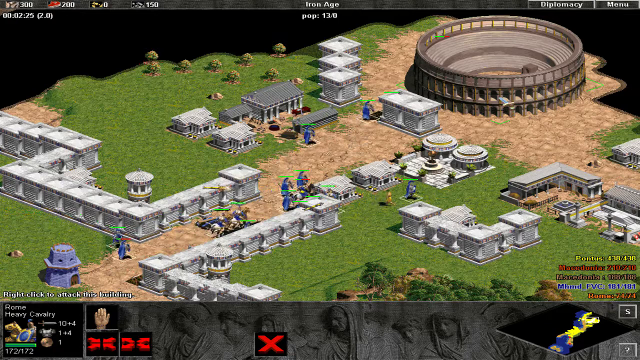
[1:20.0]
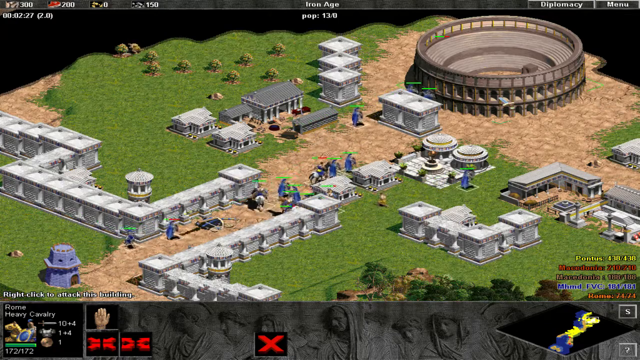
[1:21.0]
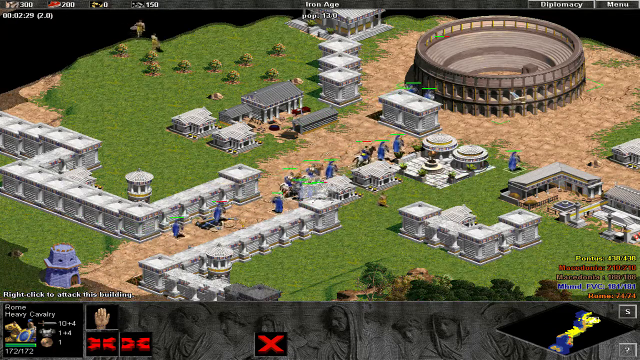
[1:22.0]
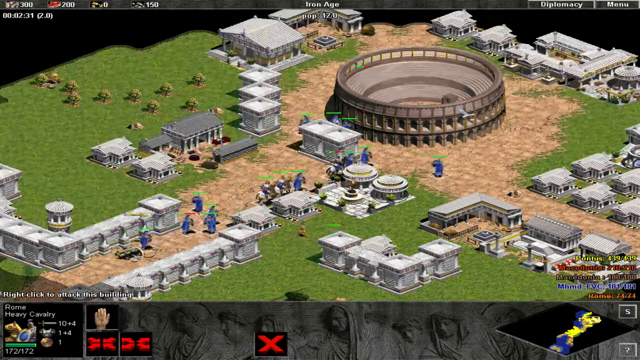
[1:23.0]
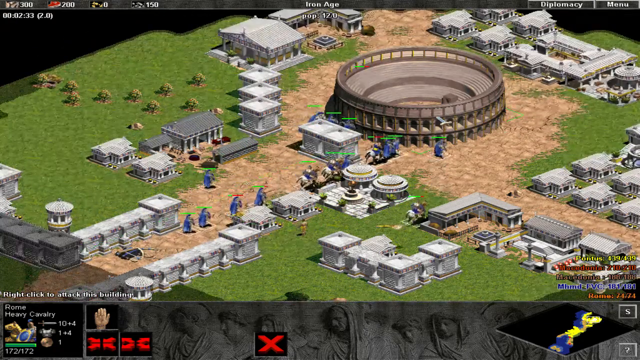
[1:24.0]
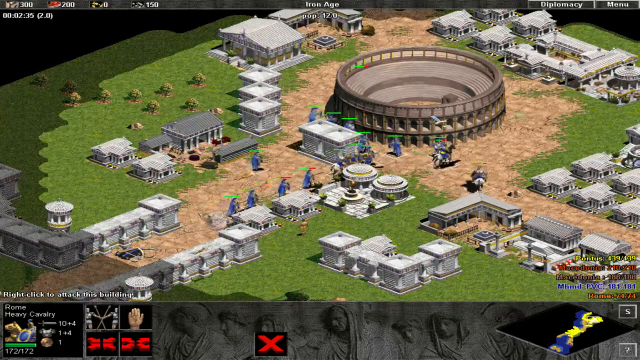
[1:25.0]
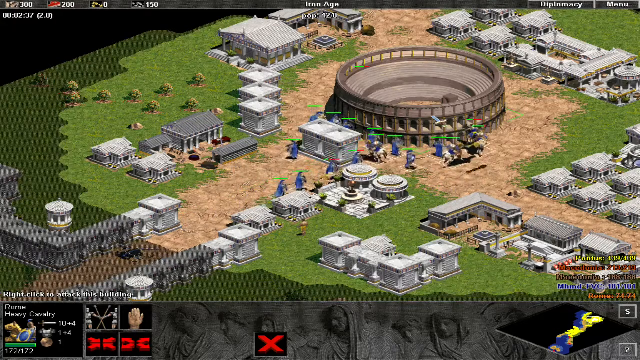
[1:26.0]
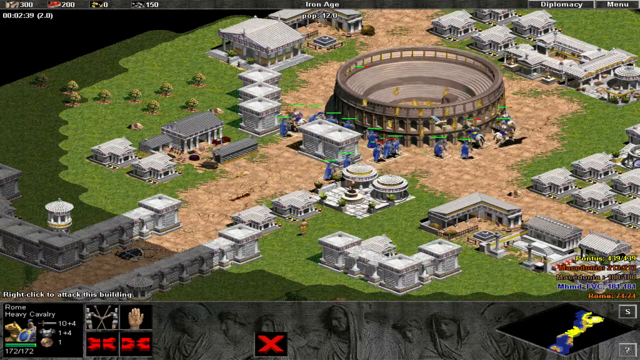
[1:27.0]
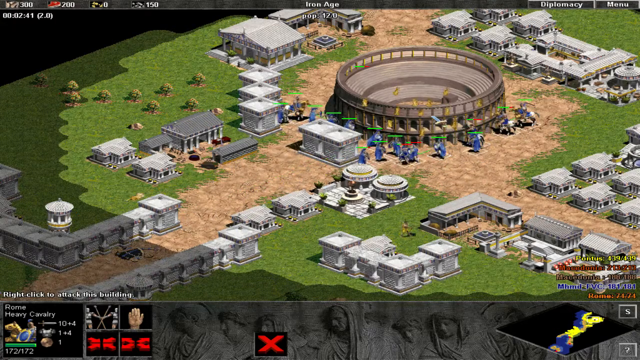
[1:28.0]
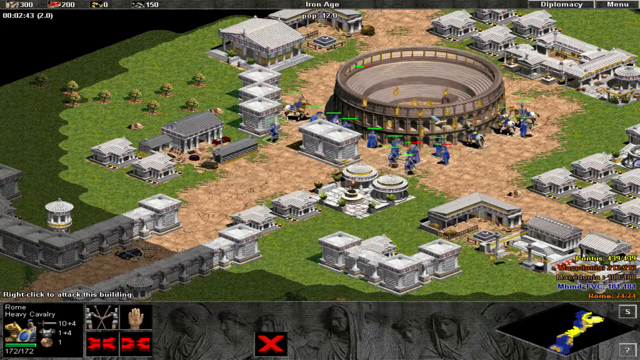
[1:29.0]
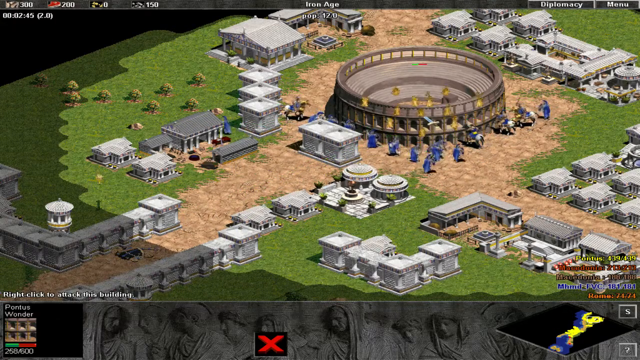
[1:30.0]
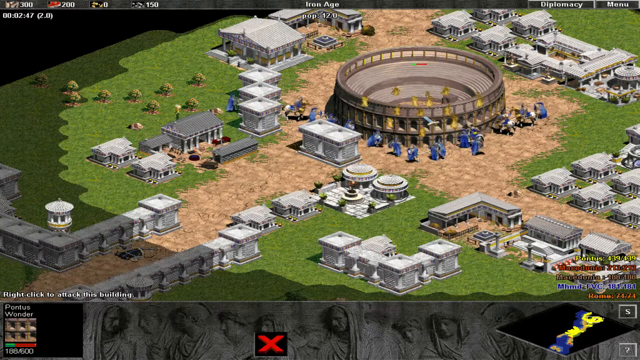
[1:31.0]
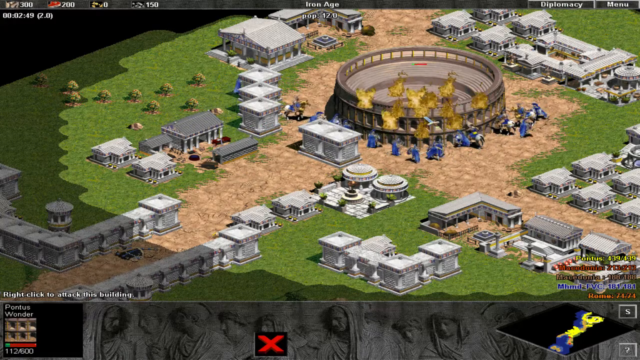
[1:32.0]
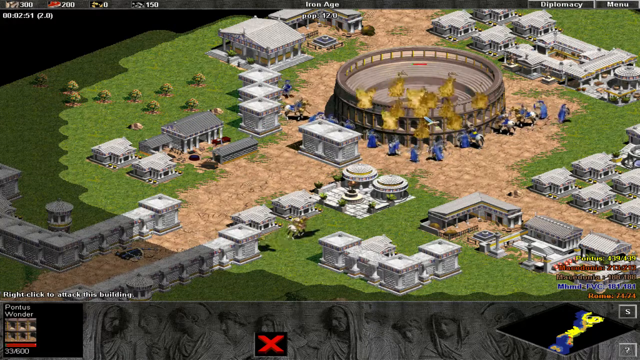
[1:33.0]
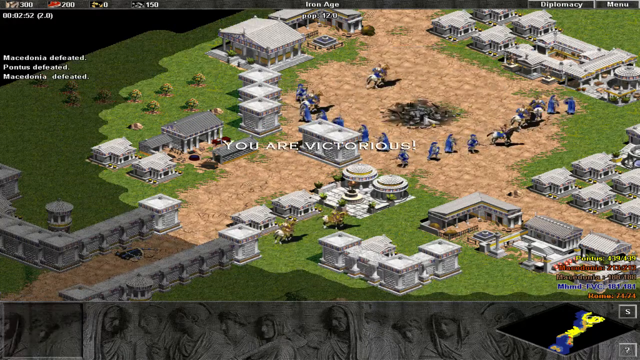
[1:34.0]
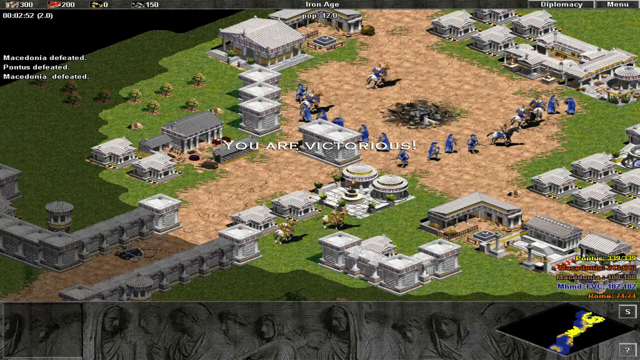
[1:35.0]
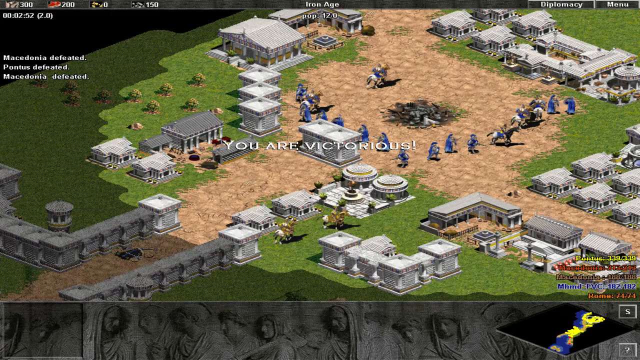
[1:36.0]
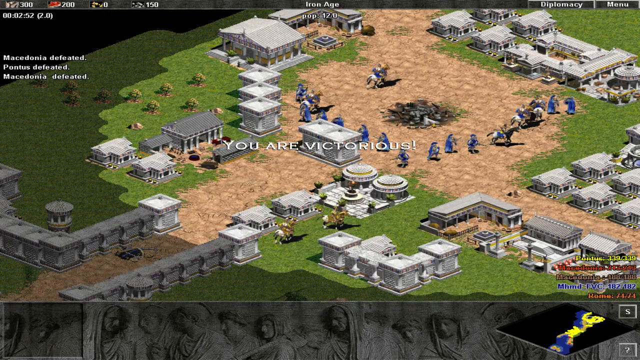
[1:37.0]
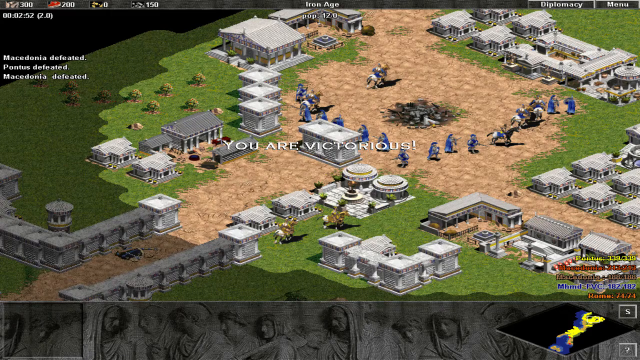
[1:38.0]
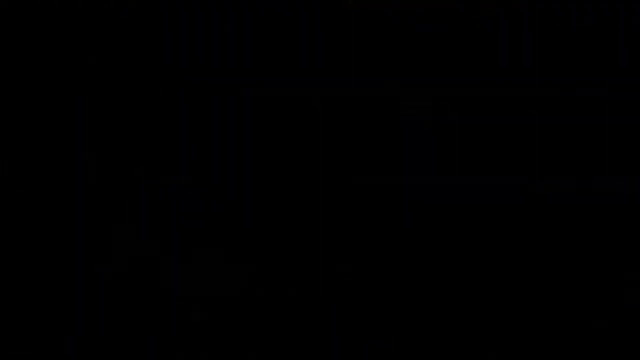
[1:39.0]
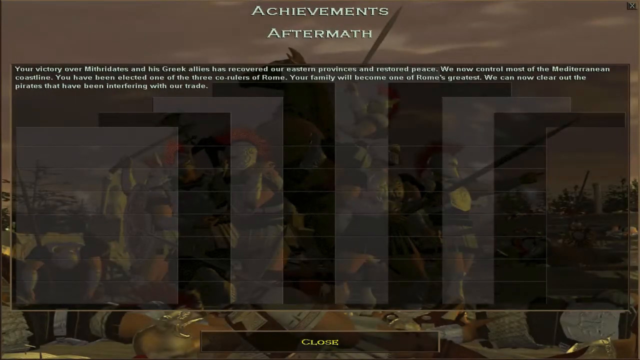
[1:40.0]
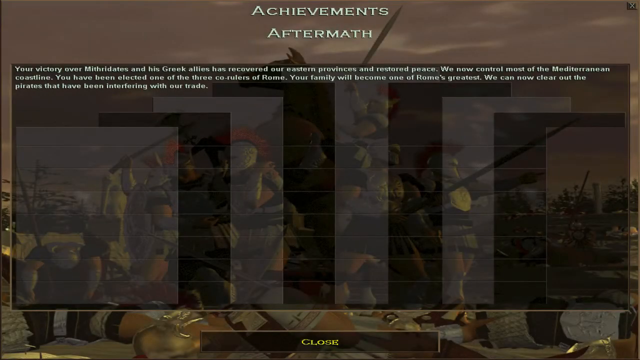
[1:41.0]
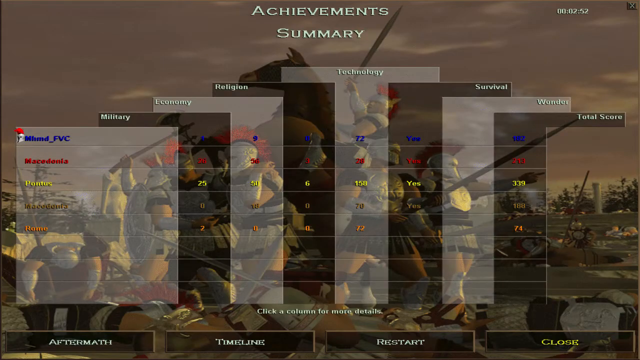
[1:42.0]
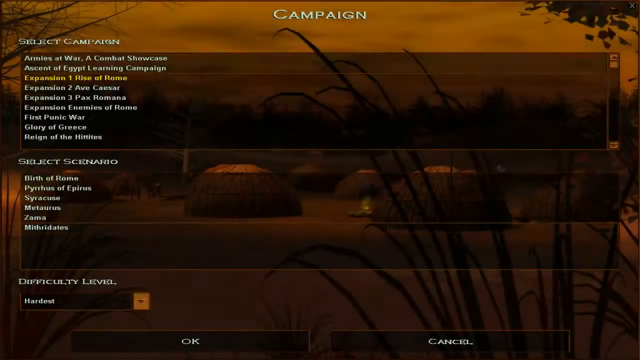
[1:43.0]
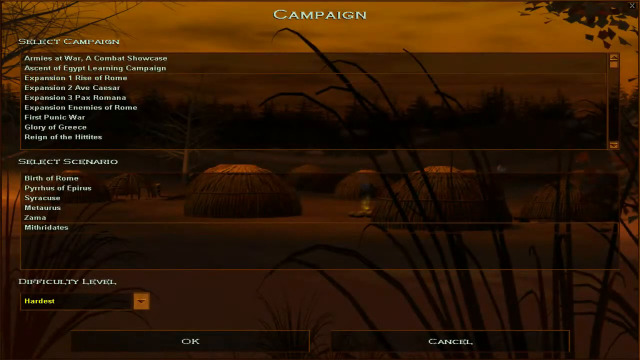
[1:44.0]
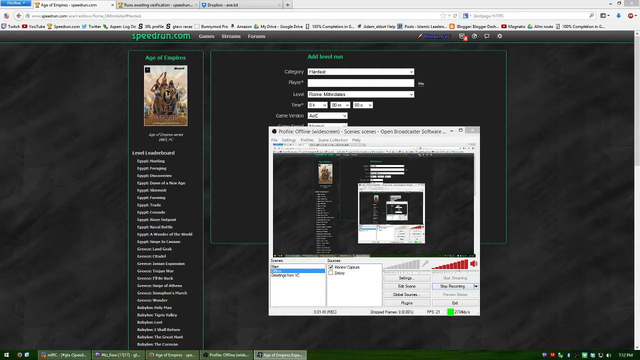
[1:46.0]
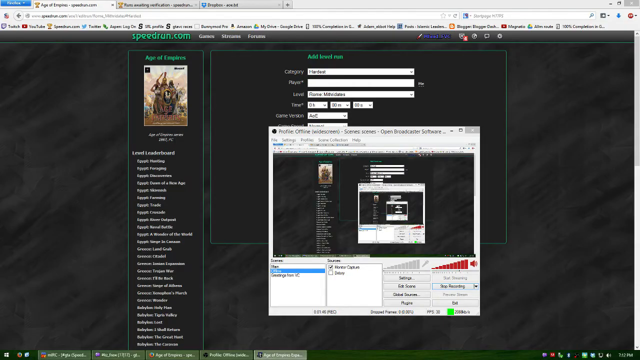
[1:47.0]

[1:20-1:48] Two armies fight, one group of warriors in blue and the other apparently in white, on a brown dirt road surrounded by white marble walls, seemingly in front of a white arch in front of the Coliseum. The fighting continues as the camera pans towards the Coliseum and the group gets closer to it. The Coliseum catches fire: little flames spark in the front before erupting into bigger flames, which eventually burn the Coliseum down completely, leaving a pile of ash. A message says "you are victorious," and in the left corner it seems to say "Macedonia Defeated, Ponce is Defeated, Macedonia Defeated." An achievements aftermath screen follows, giving a summary of statistics alongside some more information.